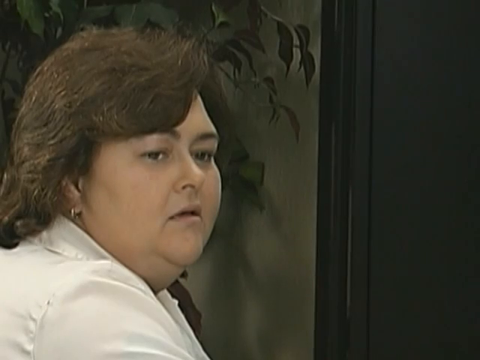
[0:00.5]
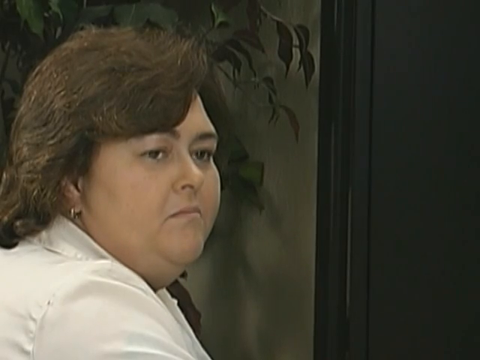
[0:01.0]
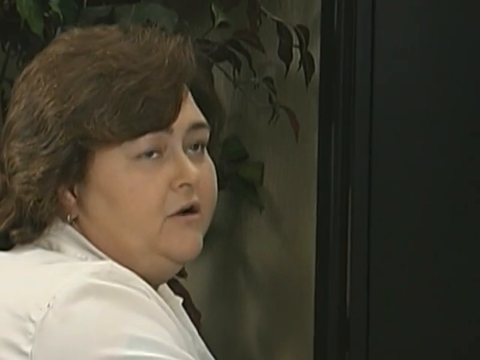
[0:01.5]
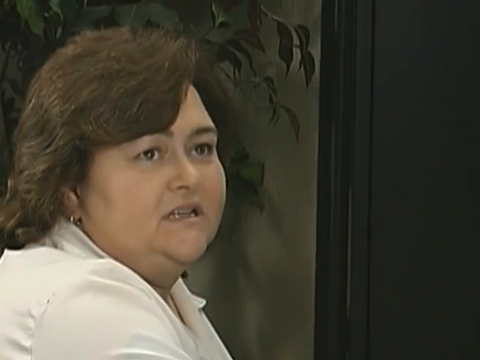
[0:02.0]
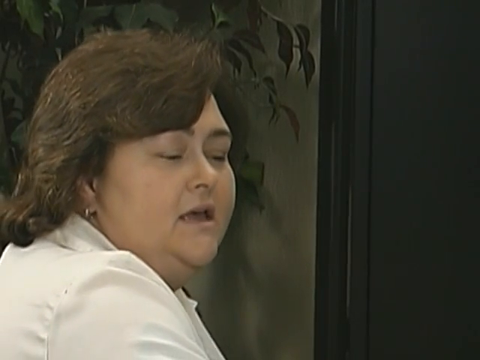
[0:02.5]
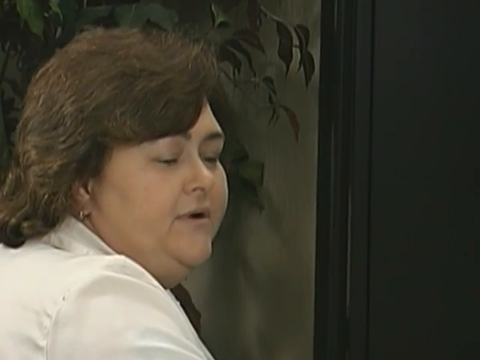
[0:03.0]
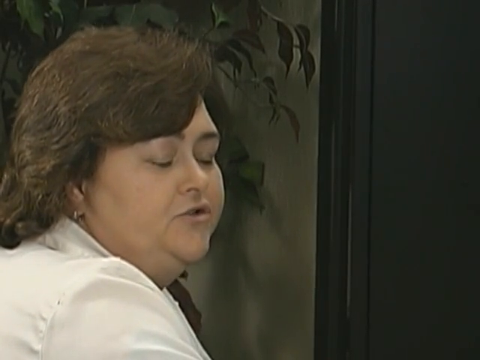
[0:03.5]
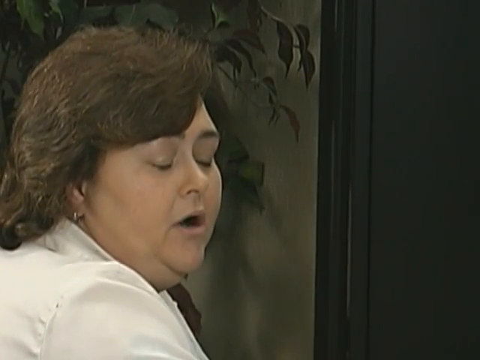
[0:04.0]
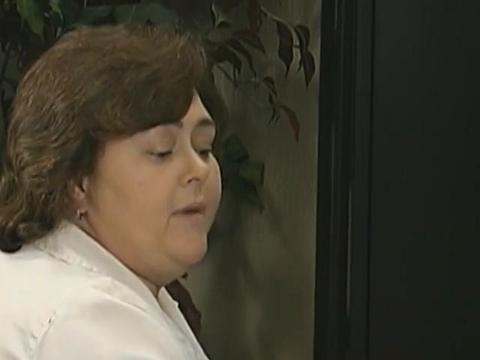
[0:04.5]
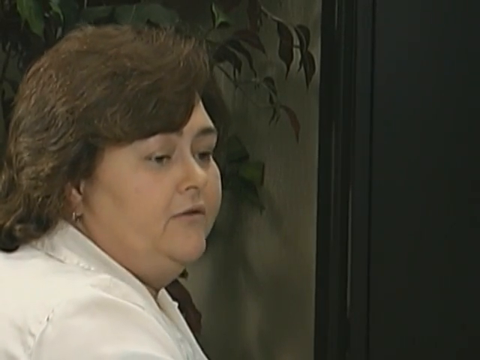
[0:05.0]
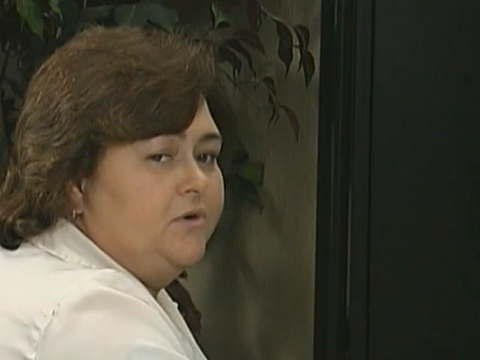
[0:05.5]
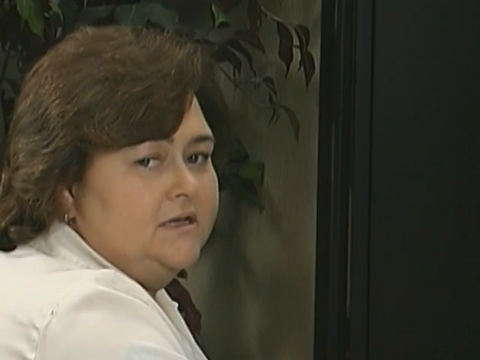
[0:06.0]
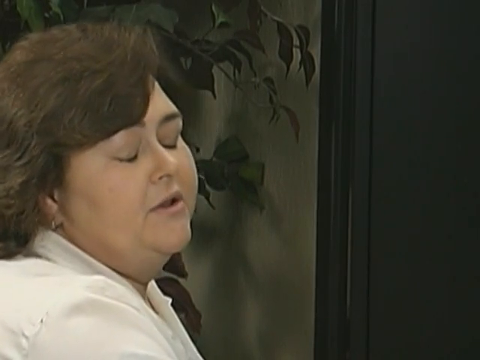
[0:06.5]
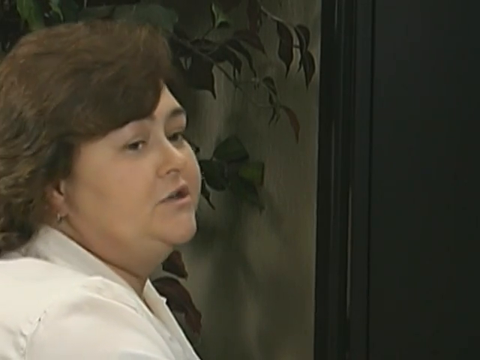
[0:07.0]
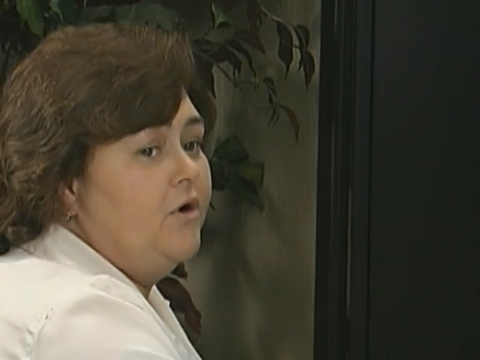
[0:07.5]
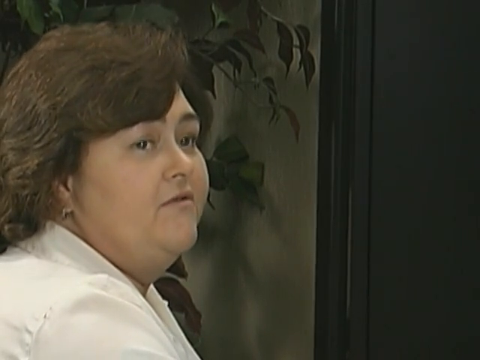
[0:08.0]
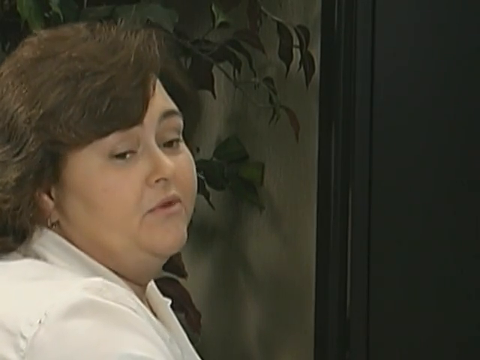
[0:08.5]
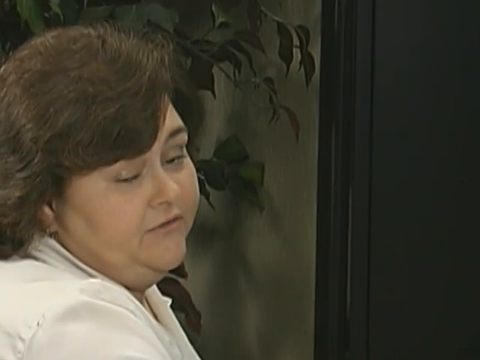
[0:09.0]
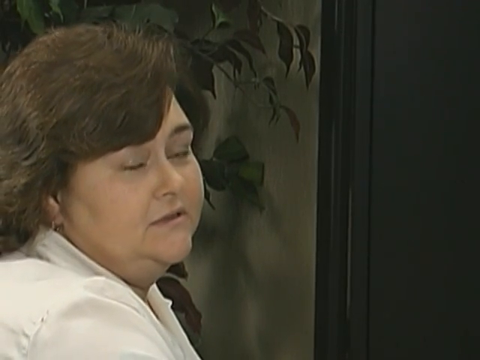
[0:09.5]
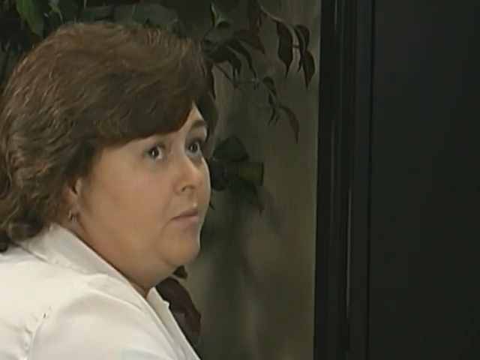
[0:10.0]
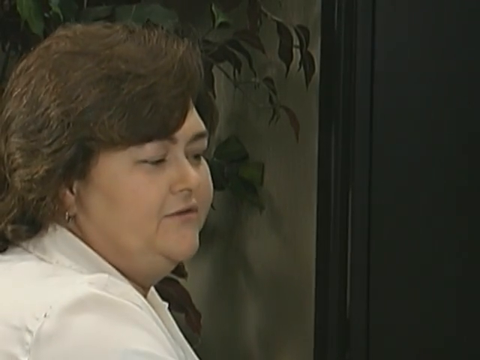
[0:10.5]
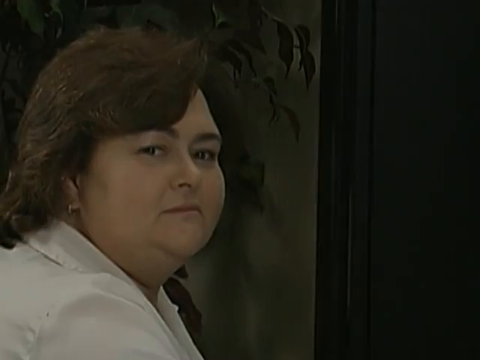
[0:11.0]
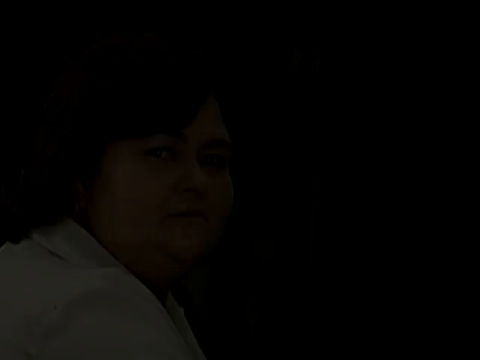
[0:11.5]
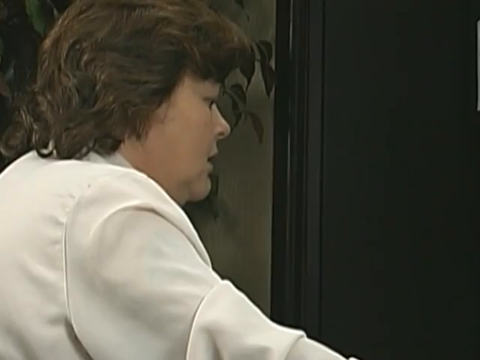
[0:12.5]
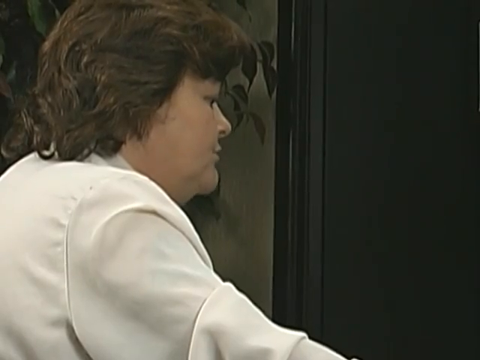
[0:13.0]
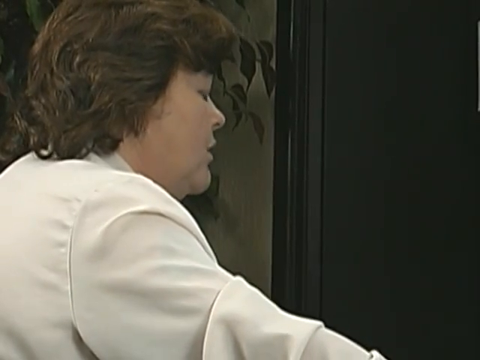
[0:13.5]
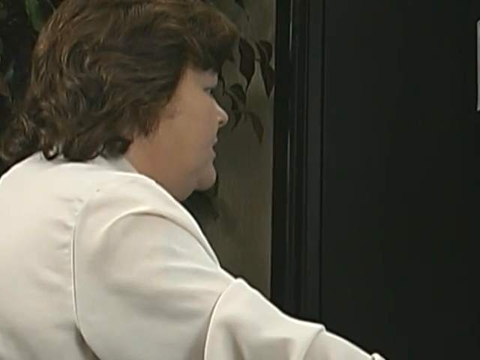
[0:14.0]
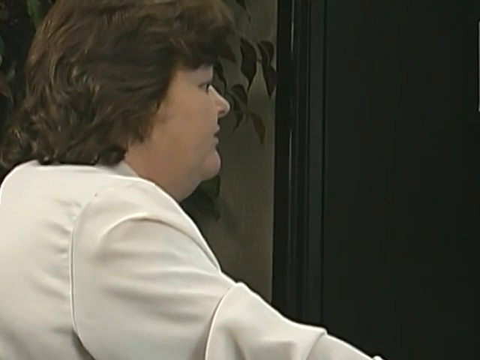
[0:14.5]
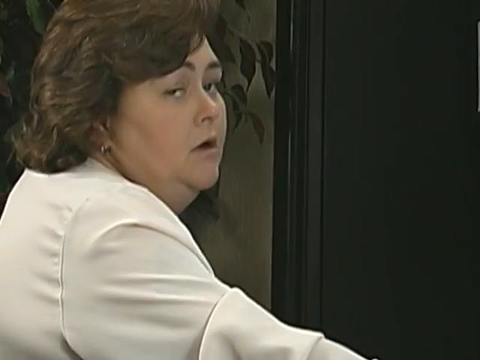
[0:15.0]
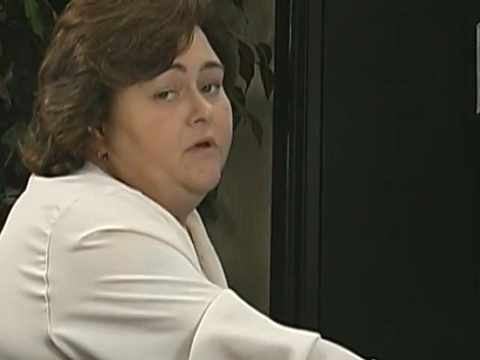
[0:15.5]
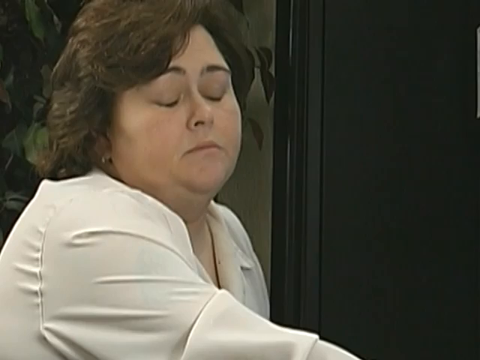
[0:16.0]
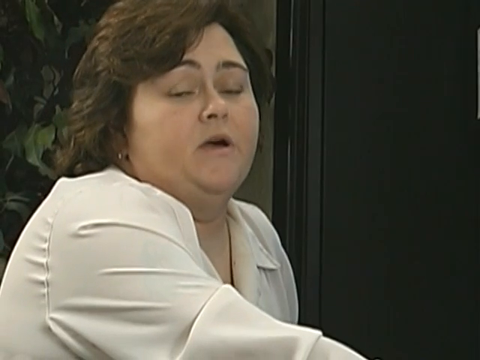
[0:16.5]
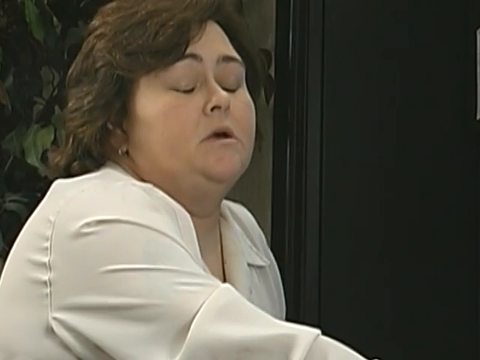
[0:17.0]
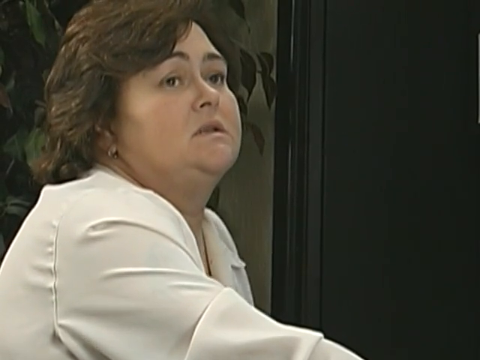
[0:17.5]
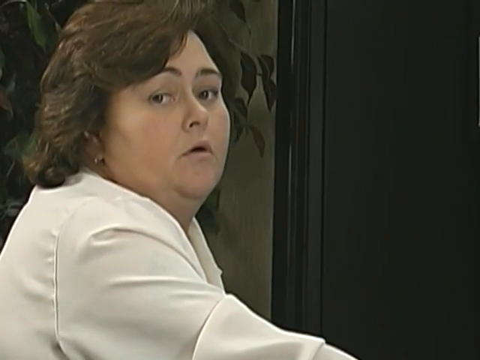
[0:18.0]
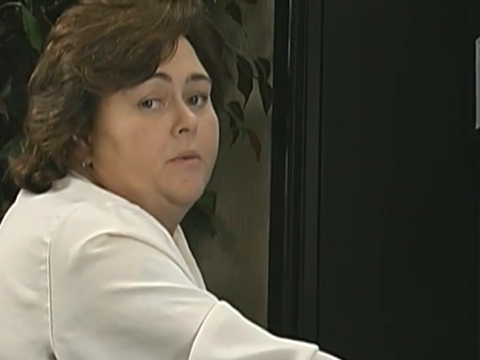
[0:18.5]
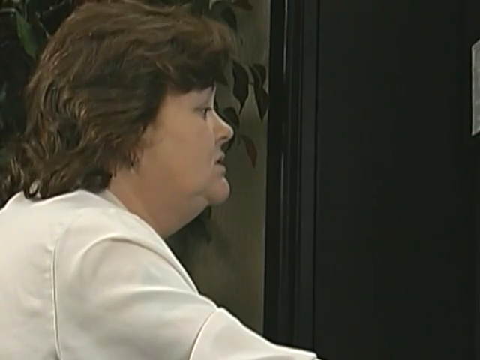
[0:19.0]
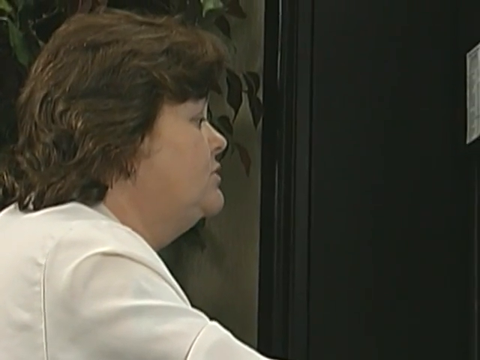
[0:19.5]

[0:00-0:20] A woman, probably in her 30s and overweight, is talking, either to someone or just to the camera. Sometimes she looks at the camera, but mostly she looks at the monitor, and she is working on something at the same time. The video does not look new and may have been recorded in the 1980s; her clothes also look like they are from the 1980s. Only the right side of her face is visible. She wears an earring, probably gold. Her hair is old-fashioned and quite long. She looks like she is complaining about something and does not look very happy.